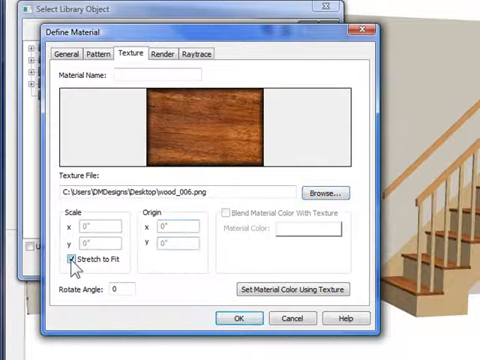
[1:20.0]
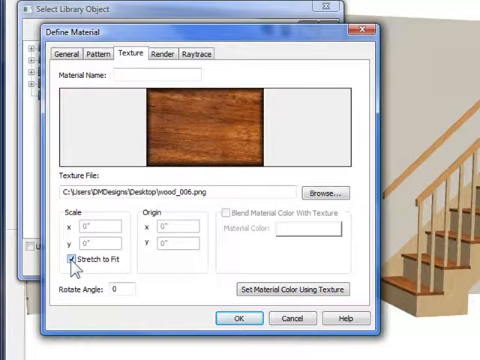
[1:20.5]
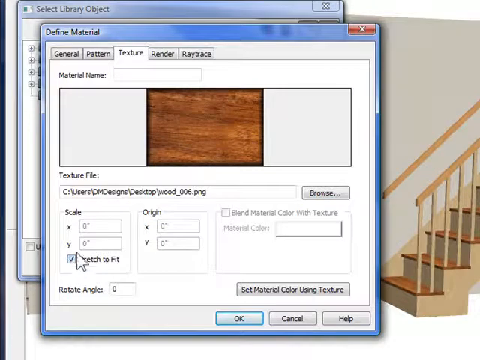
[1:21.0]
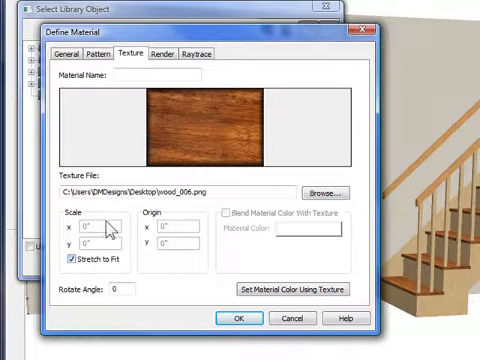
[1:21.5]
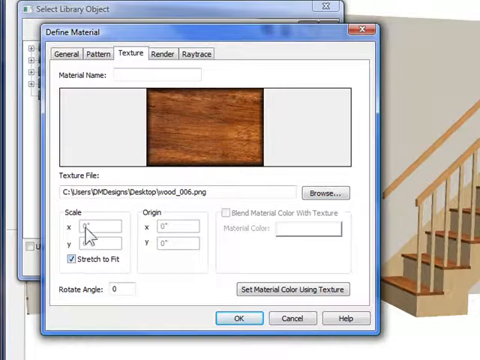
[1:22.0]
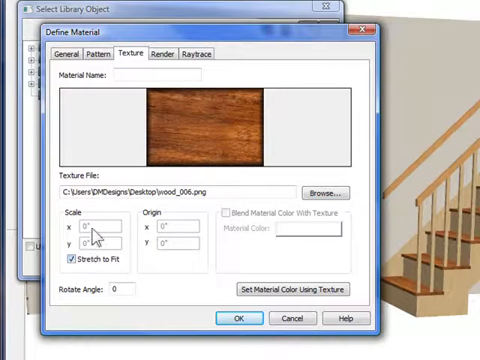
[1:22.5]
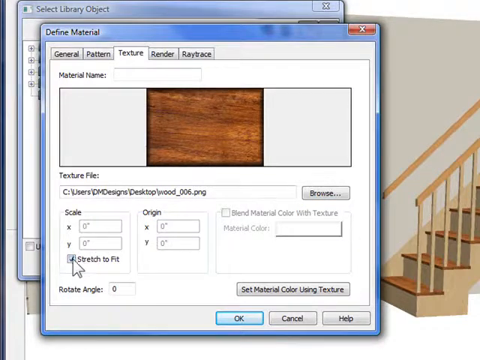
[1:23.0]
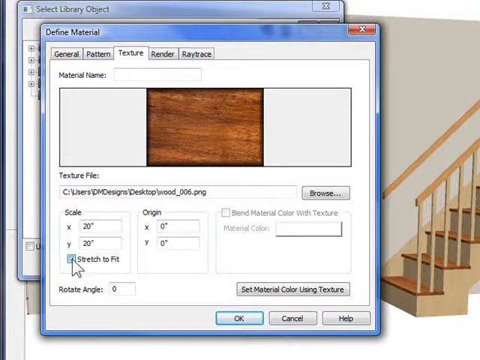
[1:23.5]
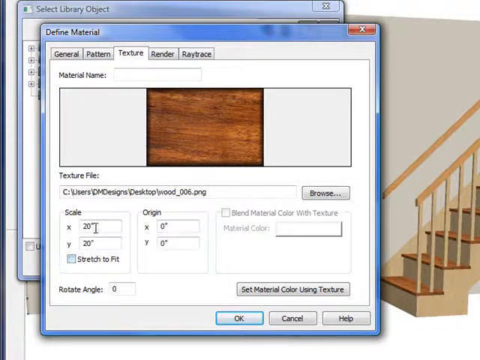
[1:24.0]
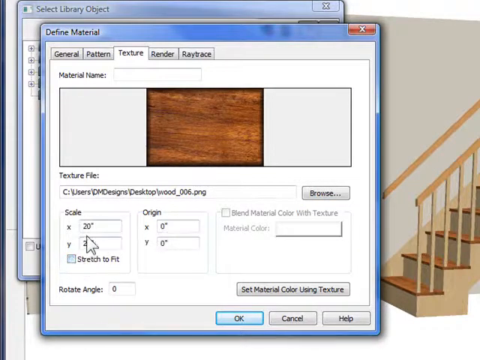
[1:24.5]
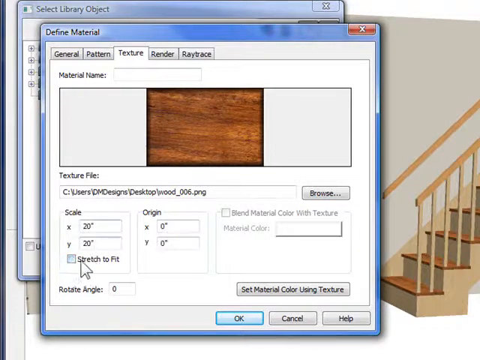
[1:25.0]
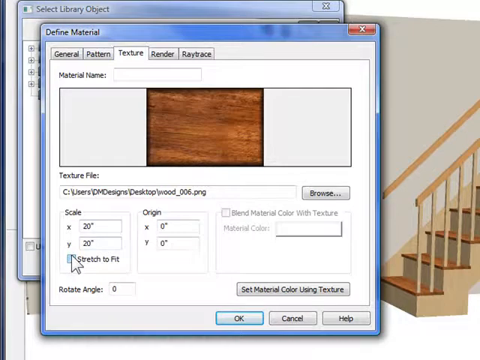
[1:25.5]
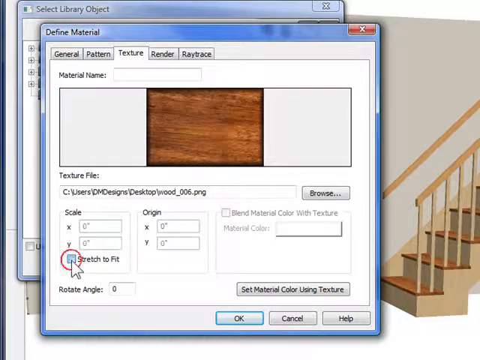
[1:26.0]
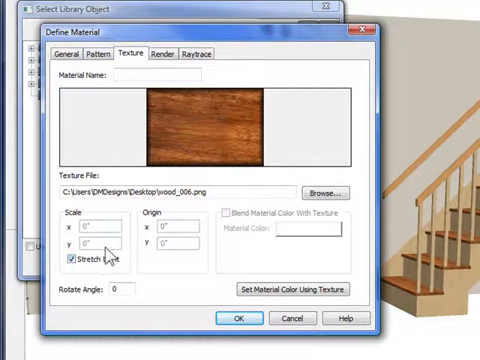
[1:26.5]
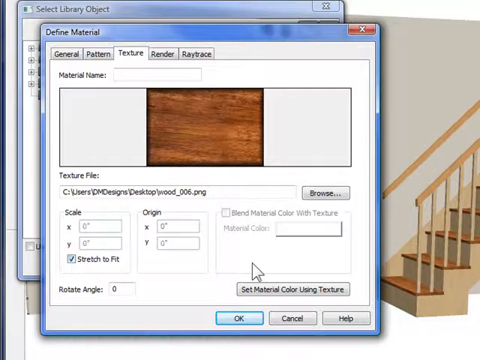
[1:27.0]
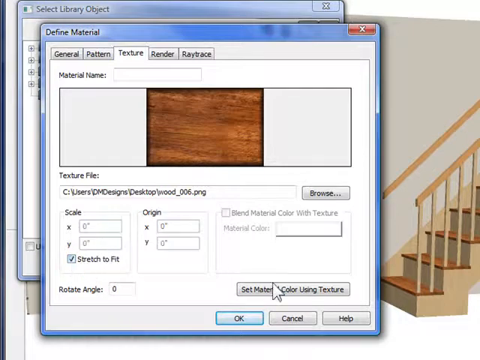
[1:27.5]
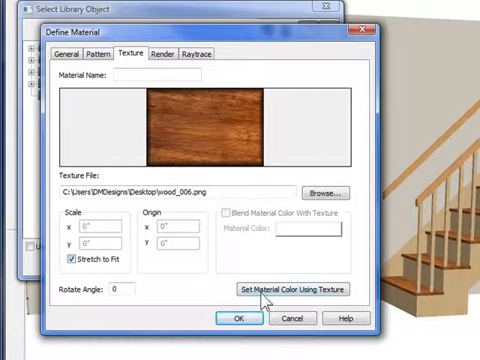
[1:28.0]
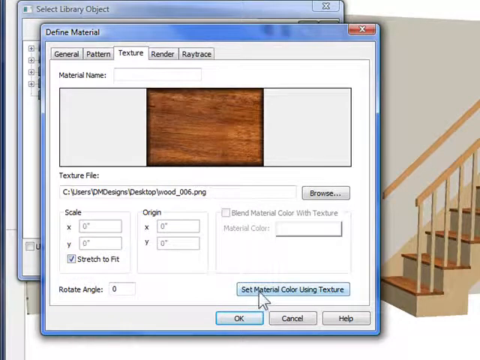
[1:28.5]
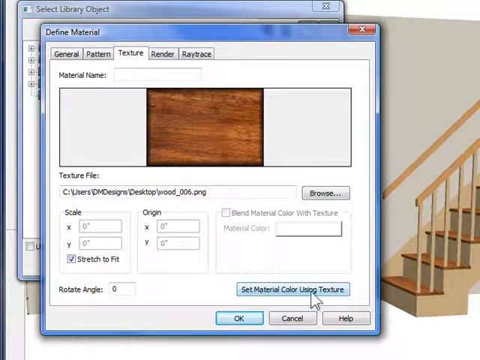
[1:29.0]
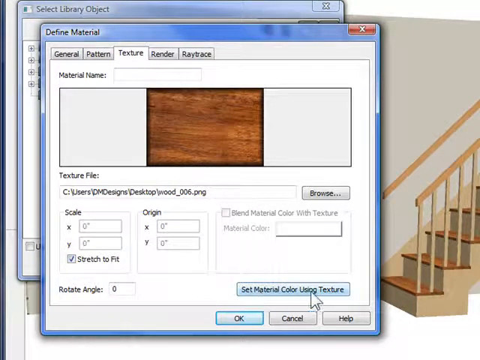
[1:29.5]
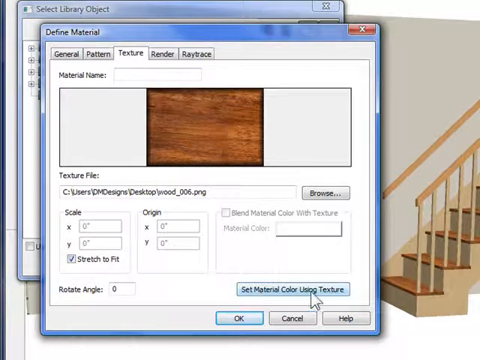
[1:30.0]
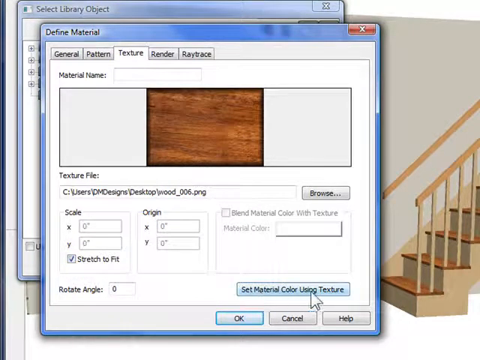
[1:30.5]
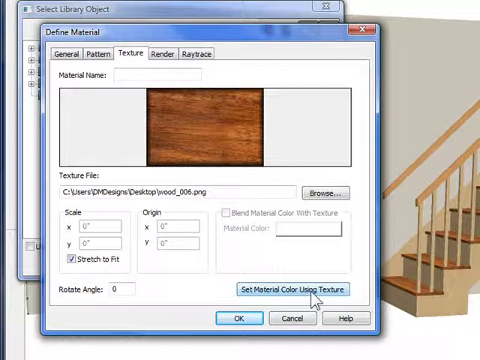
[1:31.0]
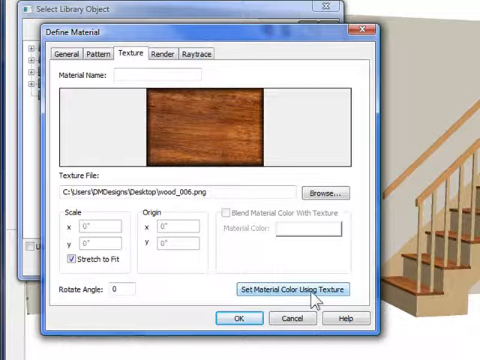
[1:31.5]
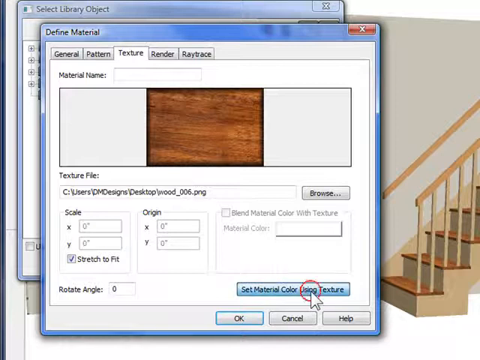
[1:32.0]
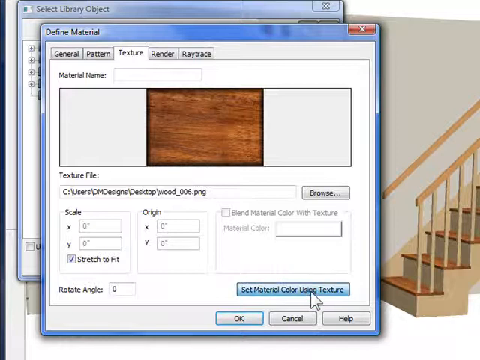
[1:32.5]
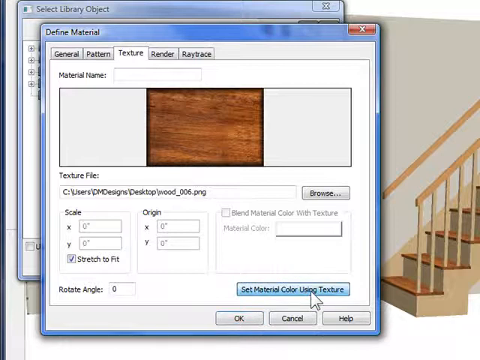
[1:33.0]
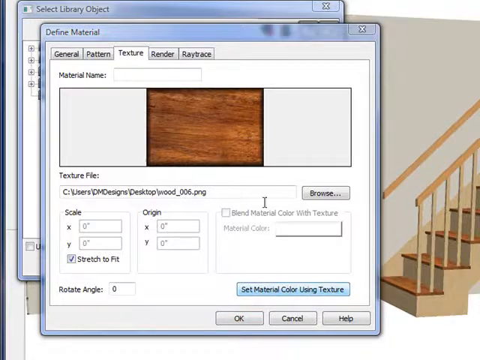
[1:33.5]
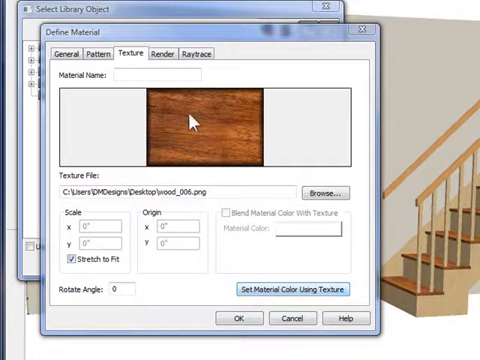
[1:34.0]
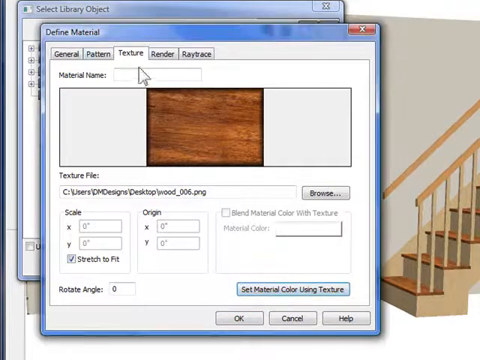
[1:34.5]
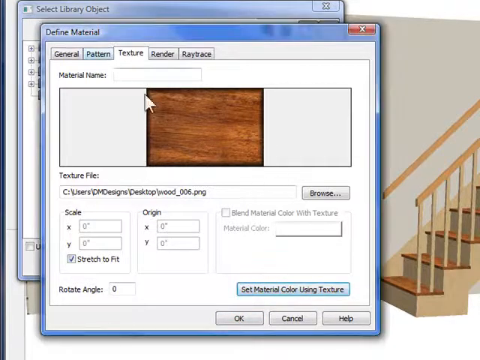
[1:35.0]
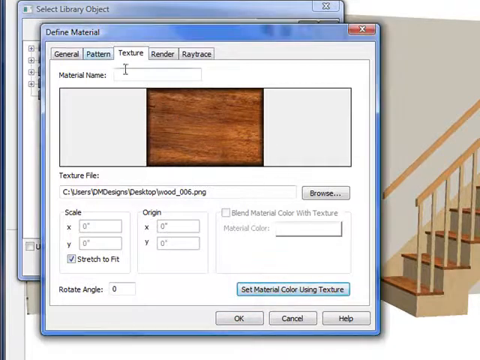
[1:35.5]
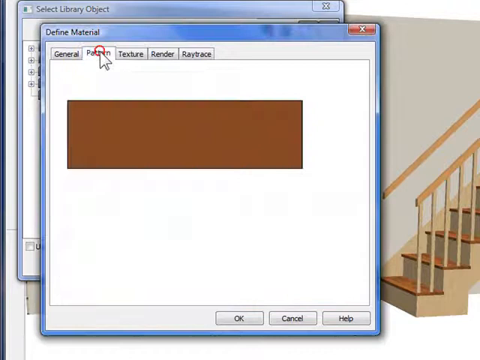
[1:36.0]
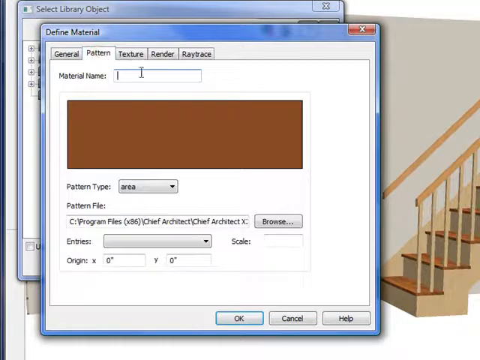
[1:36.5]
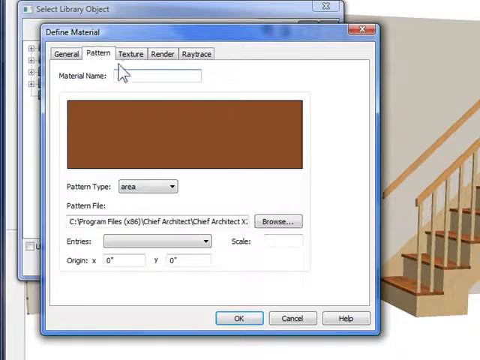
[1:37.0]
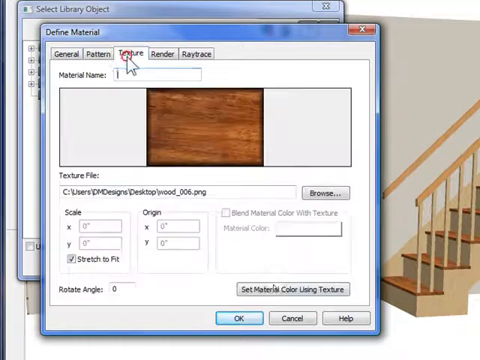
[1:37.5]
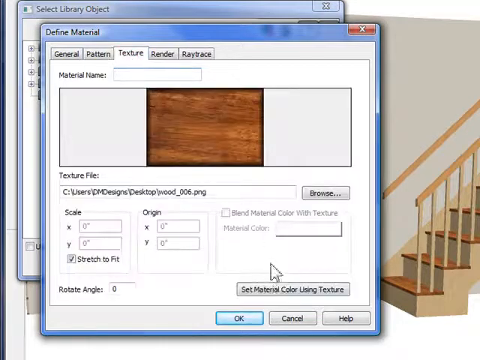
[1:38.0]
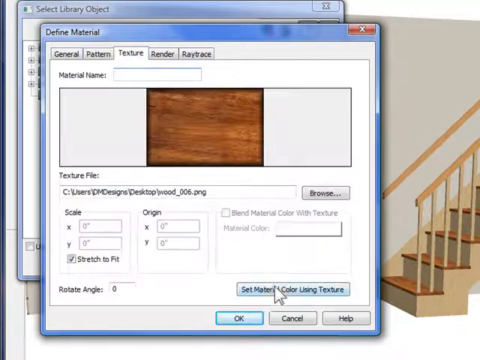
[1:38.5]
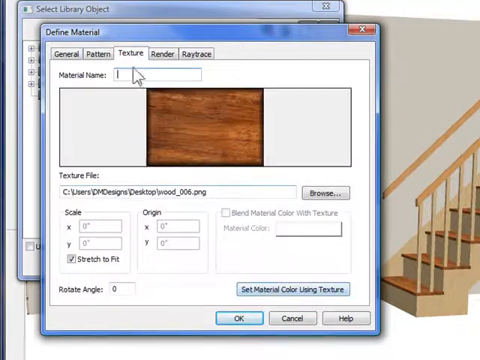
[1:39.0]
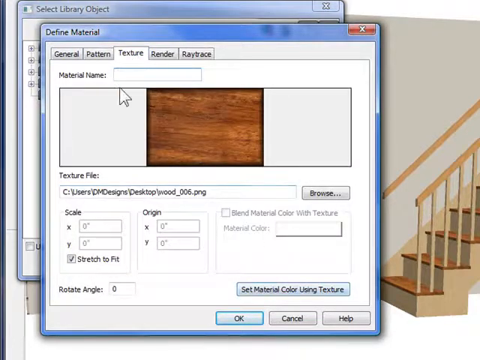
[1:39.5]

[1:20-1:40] The cursor hovers over the scale and measurements. A button reading "set material color using texture" is clicked, and the cursor hovers around the wood area. The pattern and texture tabs at the top are clicked: on the pattern tab the window shows a solid tan color instead of the textured wood, and clicking back to texture brings back the wood grain look. The focus is on the small nightstand table under the window. At the bottom are OK, Cancel and Help buttons, with OK highlighted in blue.